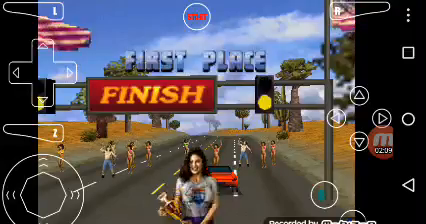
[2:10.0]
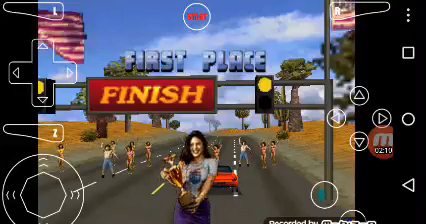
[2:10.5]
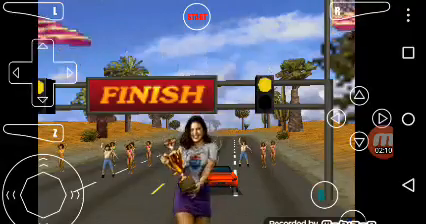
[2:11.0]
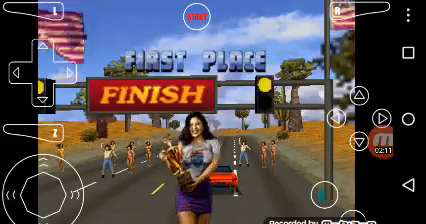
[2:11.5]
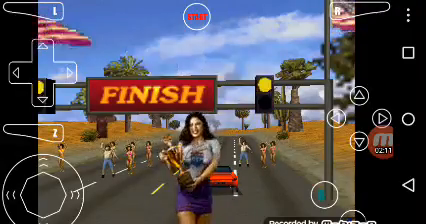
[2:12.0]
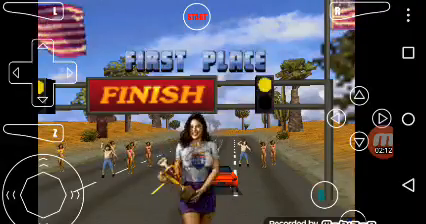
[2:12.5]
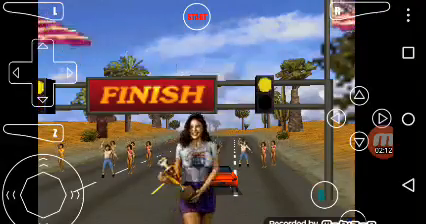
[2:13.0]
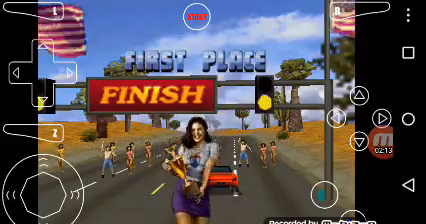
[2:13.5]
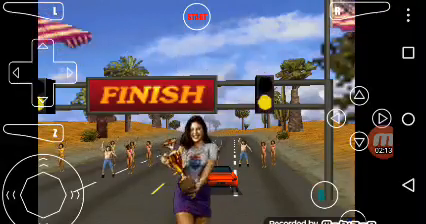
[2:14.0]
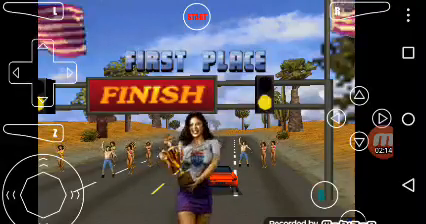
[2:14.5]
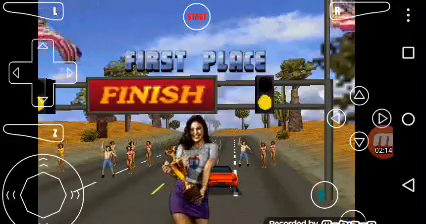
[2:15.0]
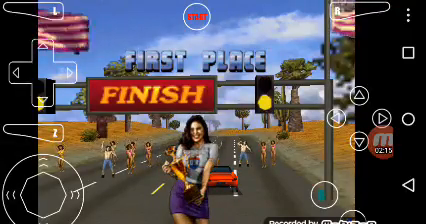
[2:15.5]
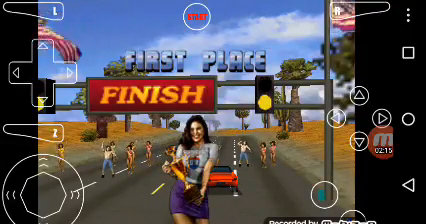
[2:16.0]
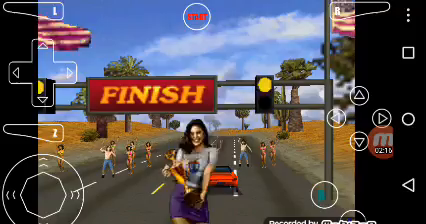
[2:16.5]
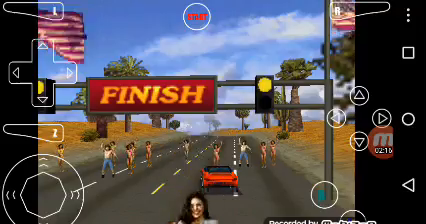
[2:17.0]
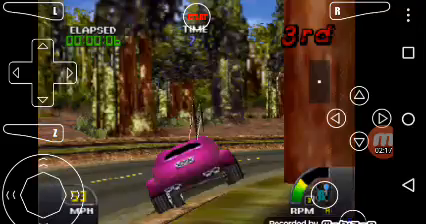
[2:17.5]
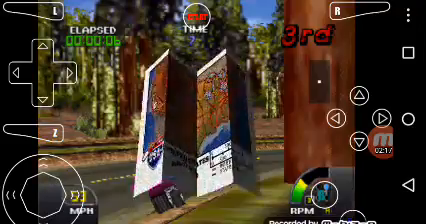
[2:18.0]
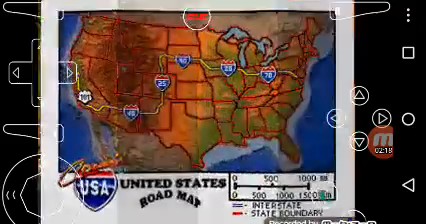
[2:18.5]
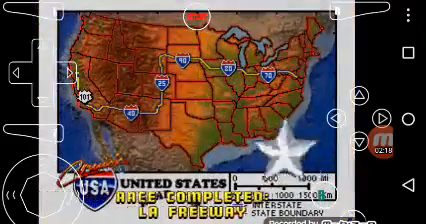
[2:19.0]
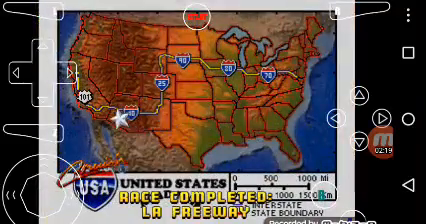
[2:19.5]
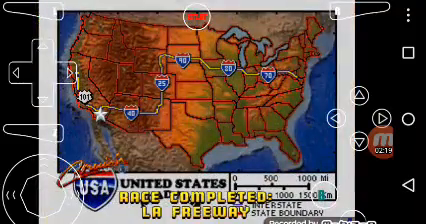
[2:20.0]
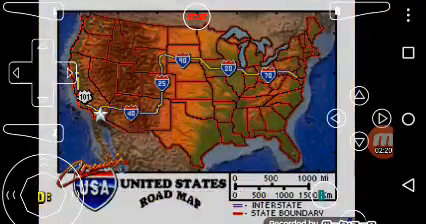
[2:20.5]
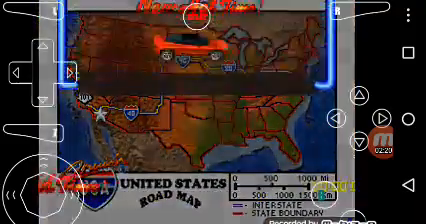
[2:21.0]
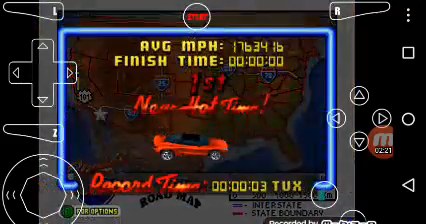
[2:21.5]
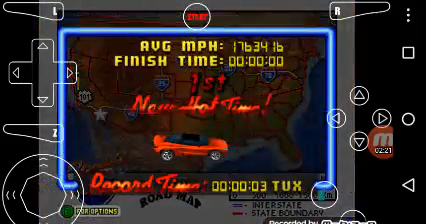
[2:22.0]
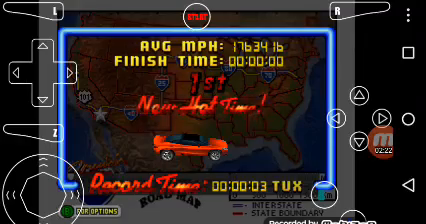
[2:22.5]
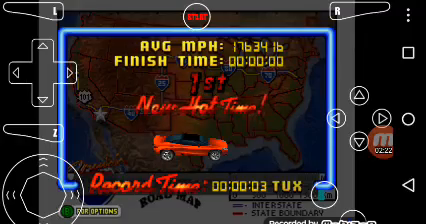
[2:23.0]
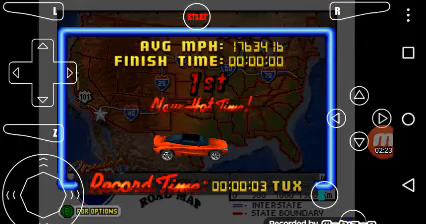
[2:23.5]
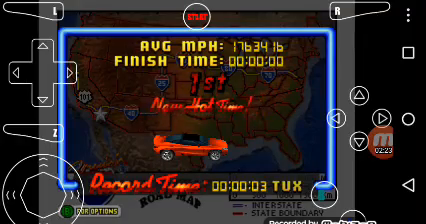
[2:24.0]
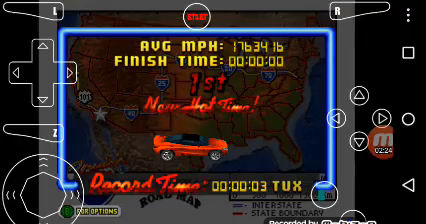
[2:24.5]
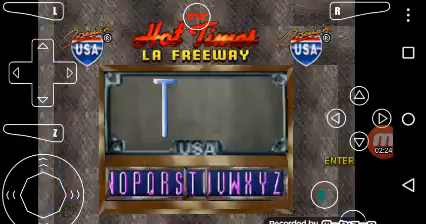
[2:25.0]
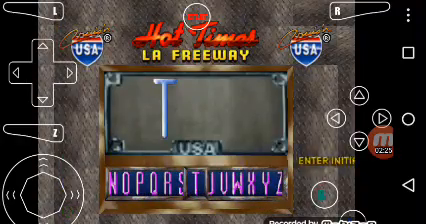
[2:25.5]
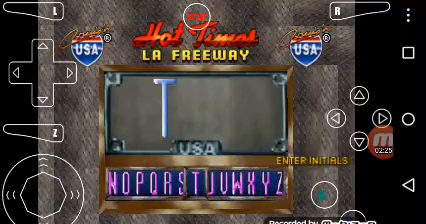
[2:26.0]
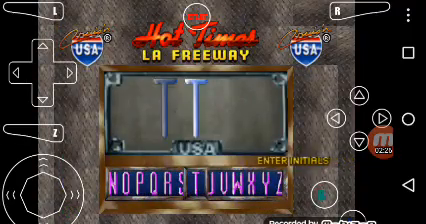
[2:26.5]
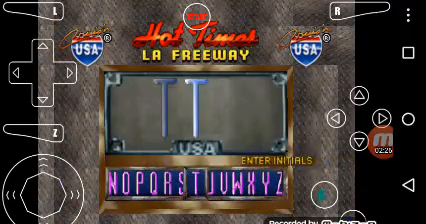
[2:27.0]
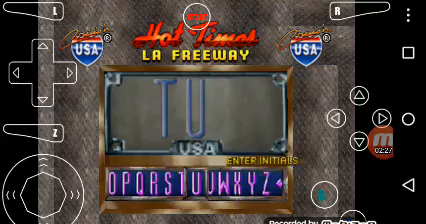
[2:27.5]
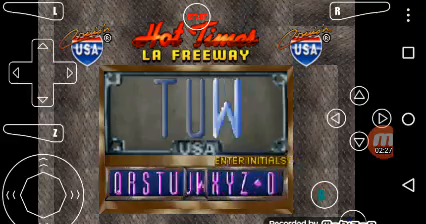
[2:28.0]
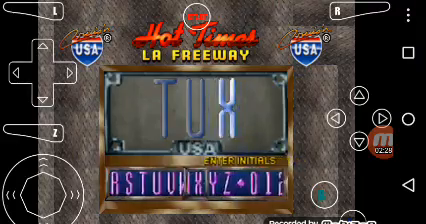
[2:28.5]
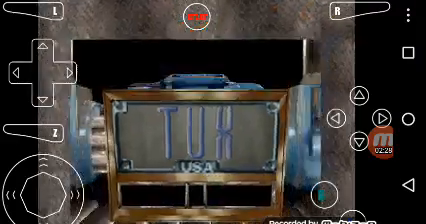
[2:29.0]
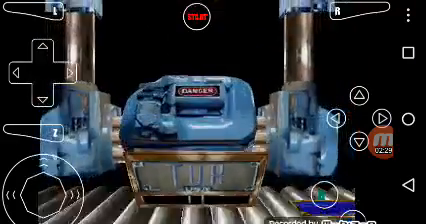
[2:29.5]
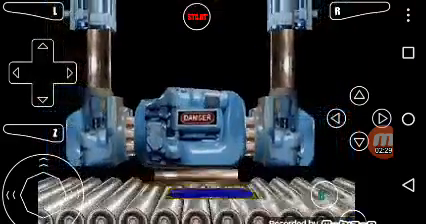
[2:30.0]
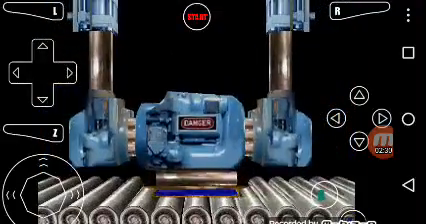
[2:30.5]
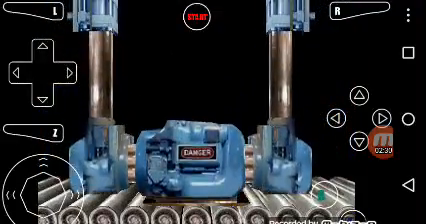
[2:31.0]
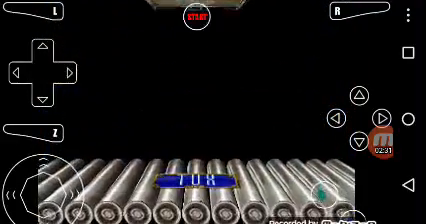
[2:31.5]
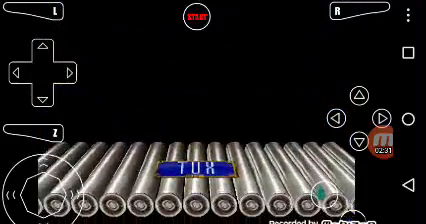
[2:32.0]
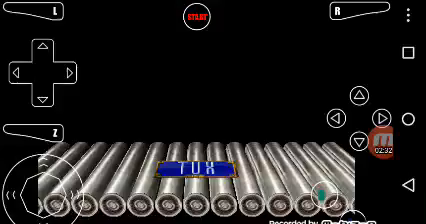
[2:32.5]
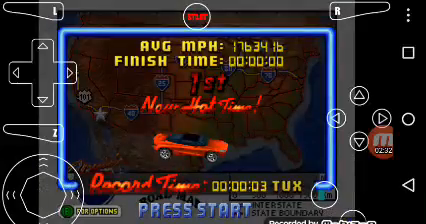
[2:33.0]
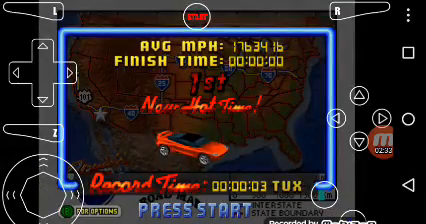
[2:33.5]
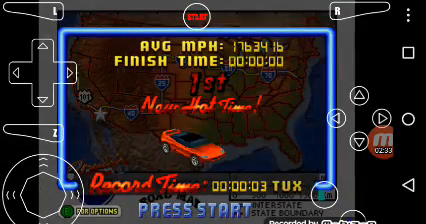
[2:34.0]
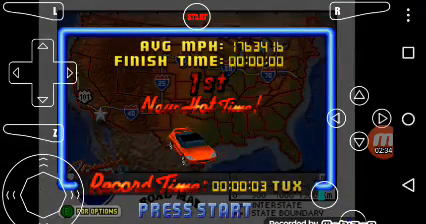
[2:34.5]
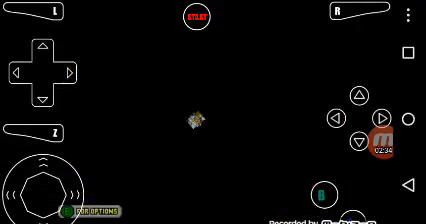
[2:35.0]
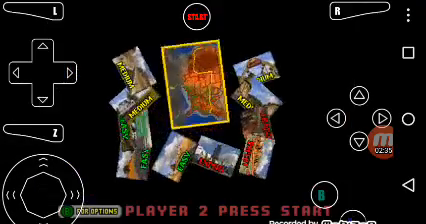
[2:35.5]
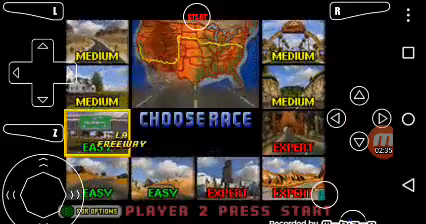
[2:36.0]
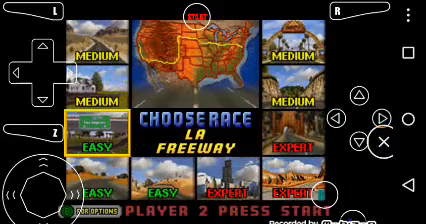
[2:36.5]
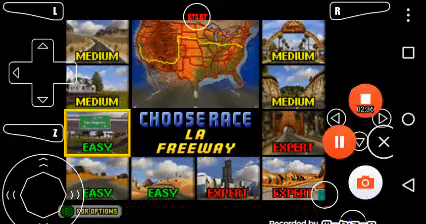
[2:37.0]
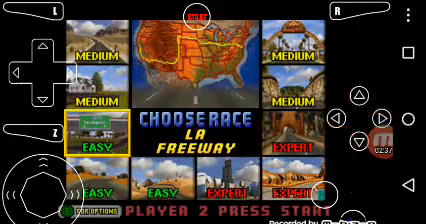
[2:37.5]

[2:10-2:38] The racing game ends. The finish sign appears on the center left of the screen; it looks like a highway sign extending over the upper part of the road so that cars drive under it. On the left and right sides of the finish sign are sets of lights blinking up and down. A person holds a trophy. The place, first, is shown in the upper center of the screen. As the video progresses, it shows just the woman holding the trophy while the American flags blow in the wind. Then a map appears, which looks like a map of the race completed in the game.